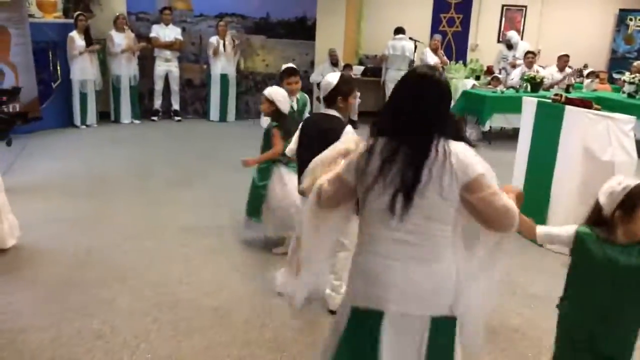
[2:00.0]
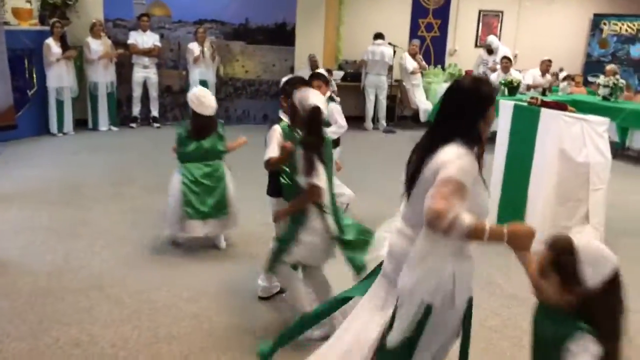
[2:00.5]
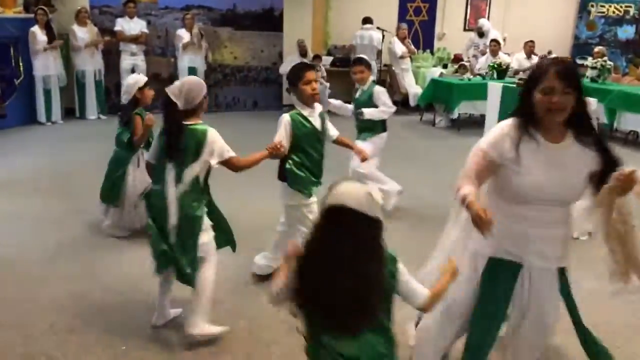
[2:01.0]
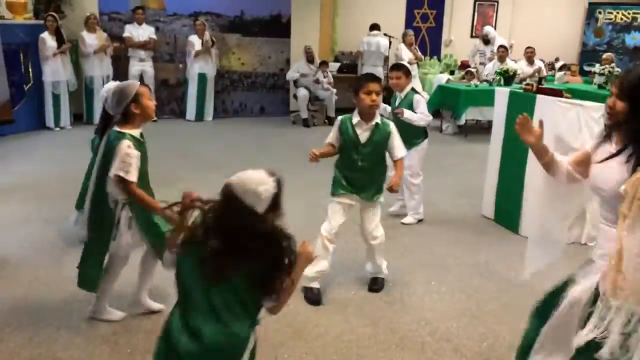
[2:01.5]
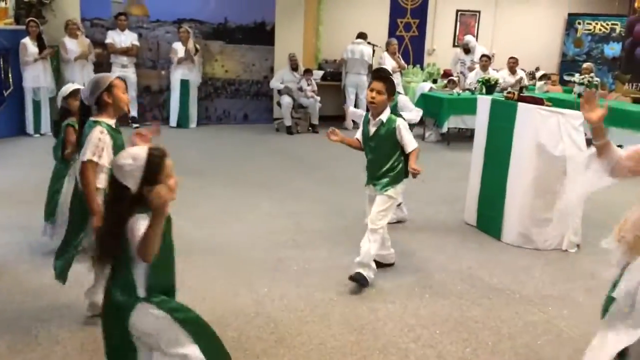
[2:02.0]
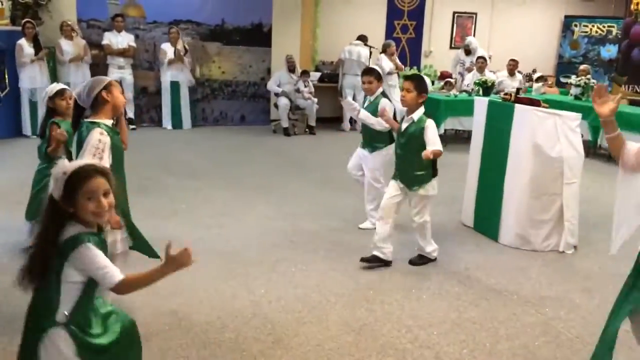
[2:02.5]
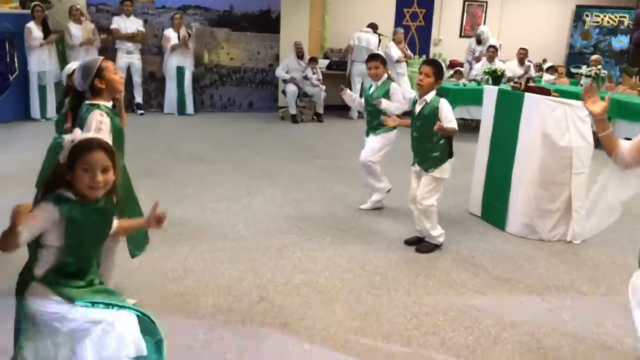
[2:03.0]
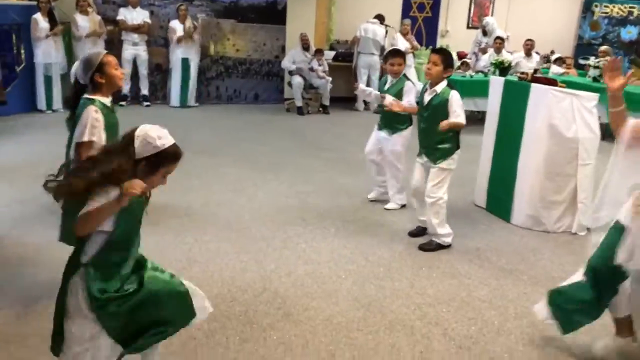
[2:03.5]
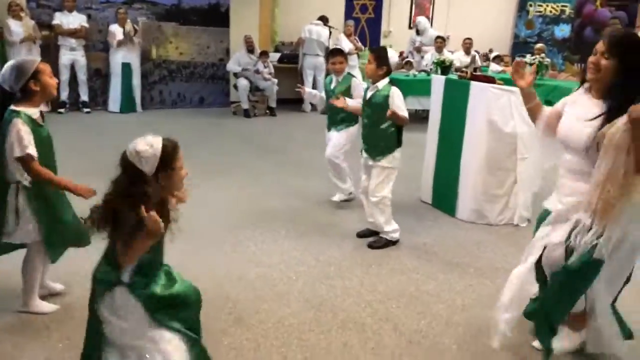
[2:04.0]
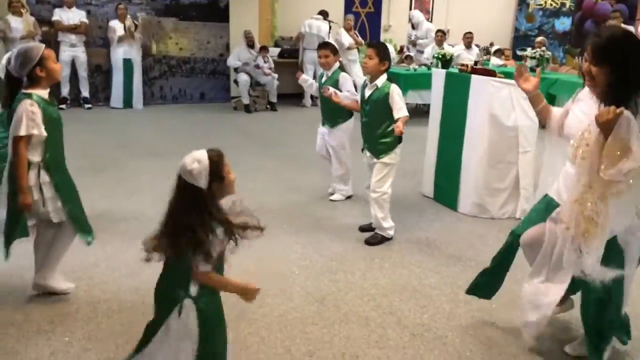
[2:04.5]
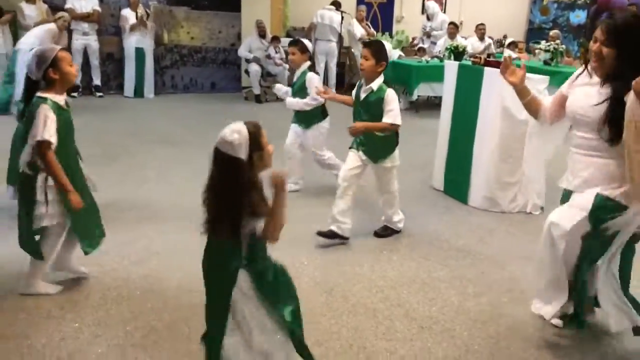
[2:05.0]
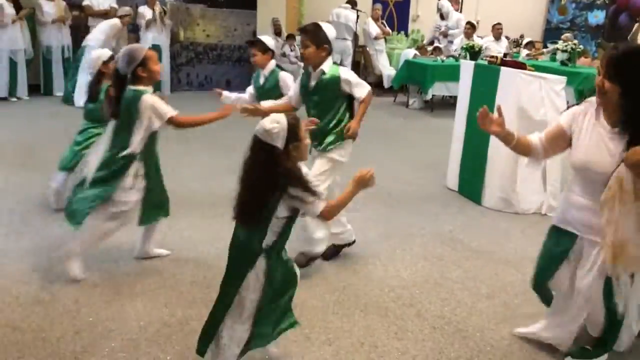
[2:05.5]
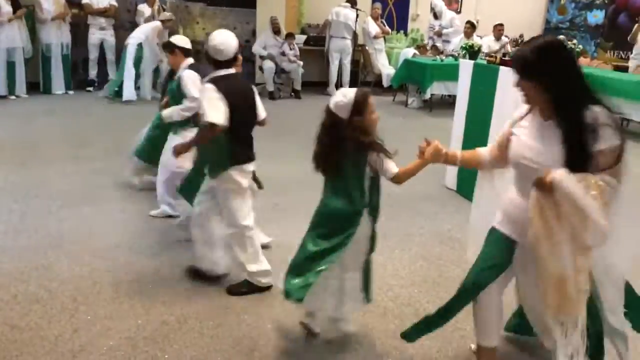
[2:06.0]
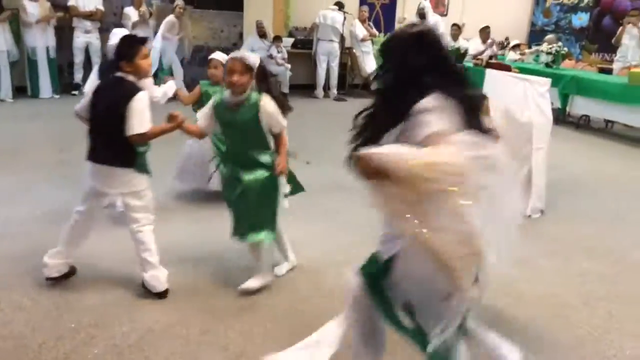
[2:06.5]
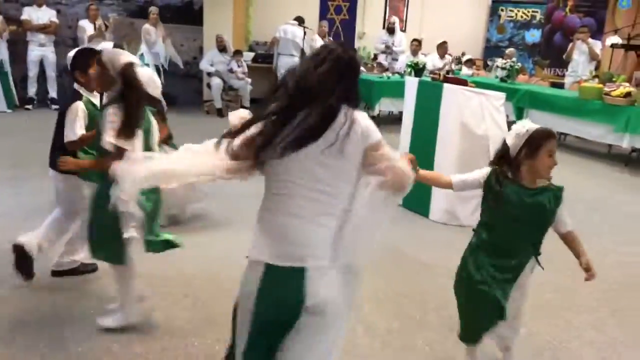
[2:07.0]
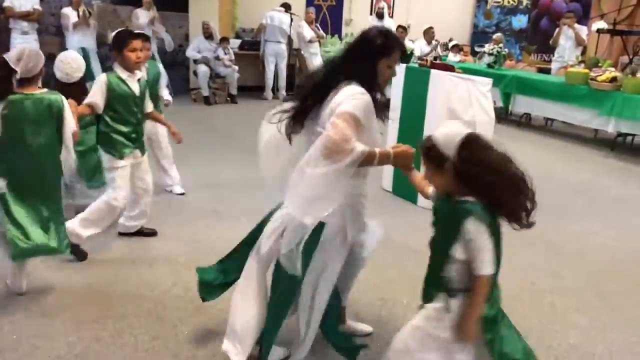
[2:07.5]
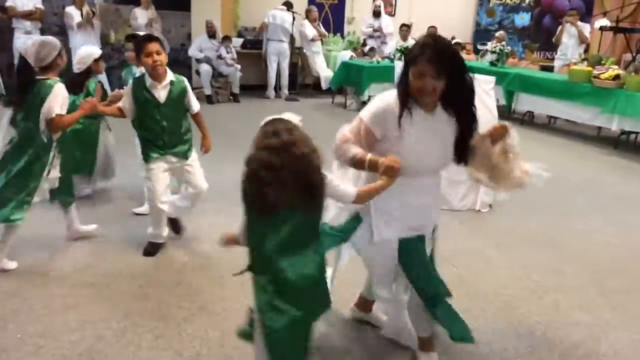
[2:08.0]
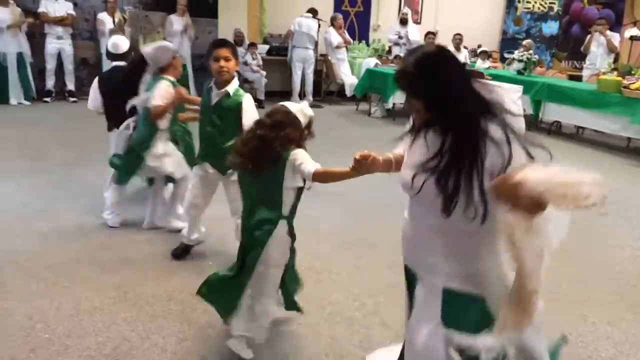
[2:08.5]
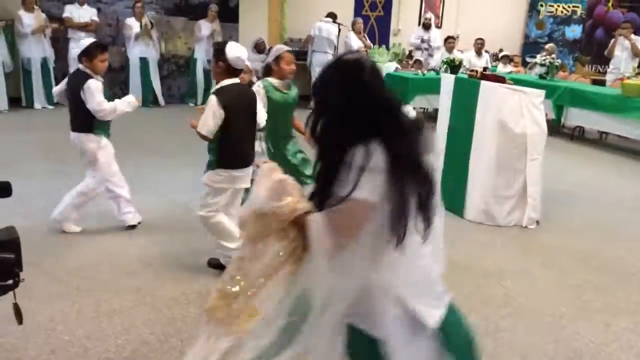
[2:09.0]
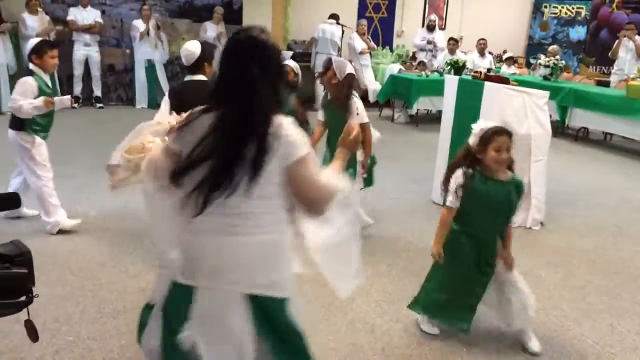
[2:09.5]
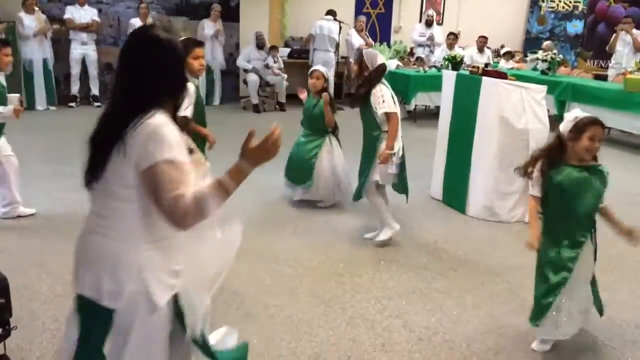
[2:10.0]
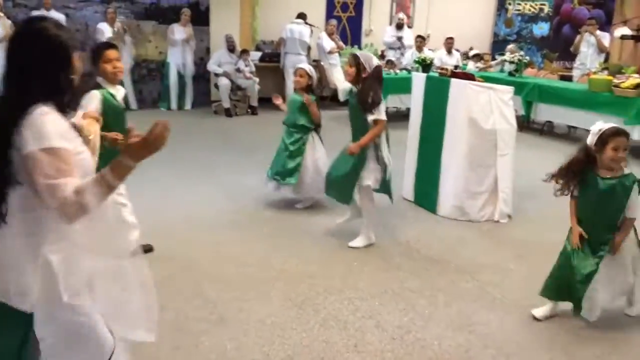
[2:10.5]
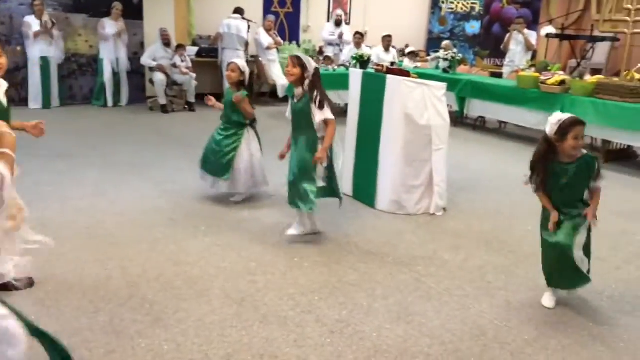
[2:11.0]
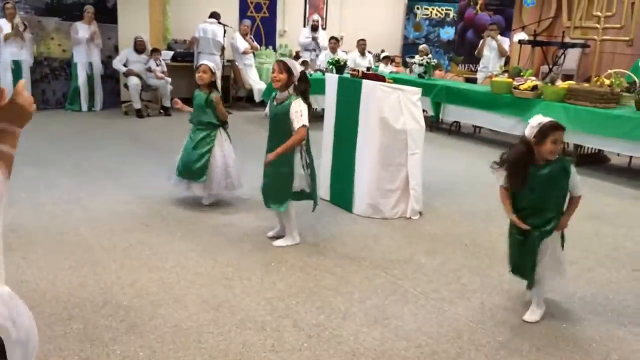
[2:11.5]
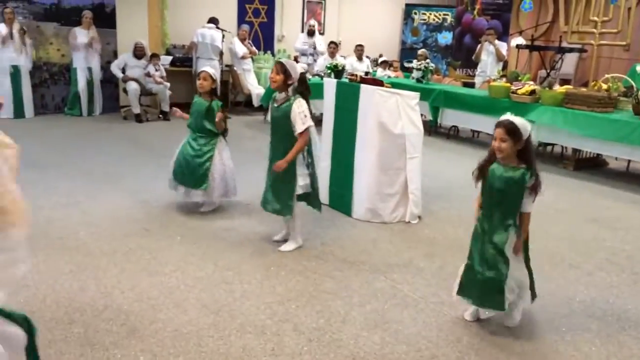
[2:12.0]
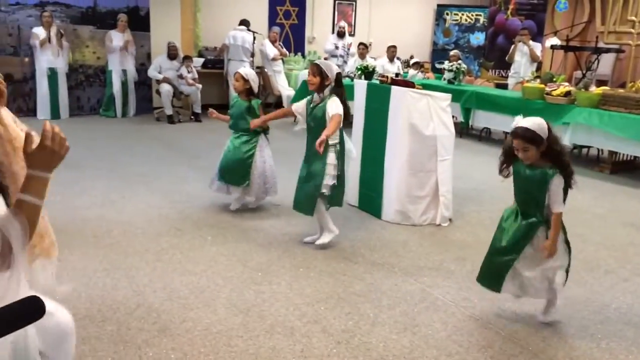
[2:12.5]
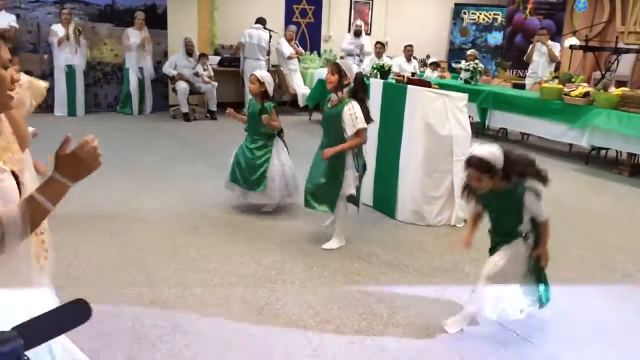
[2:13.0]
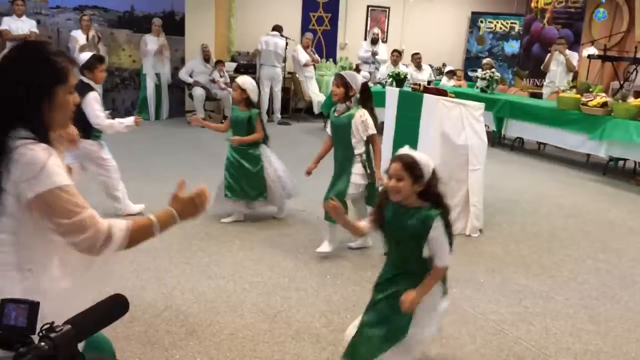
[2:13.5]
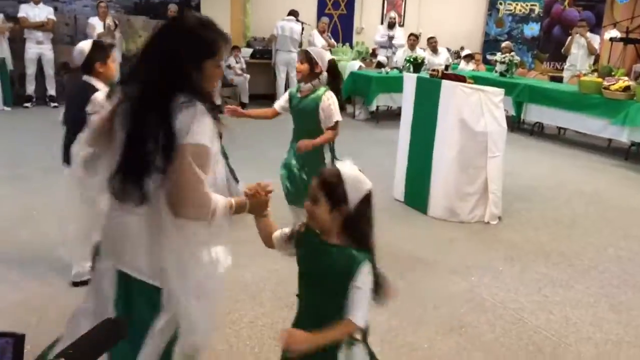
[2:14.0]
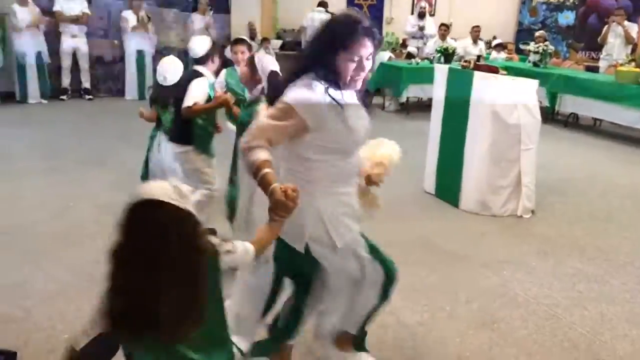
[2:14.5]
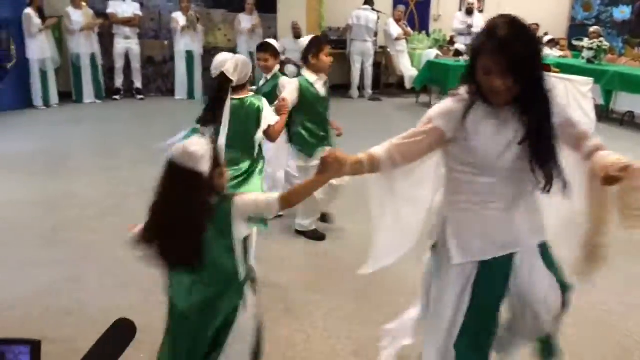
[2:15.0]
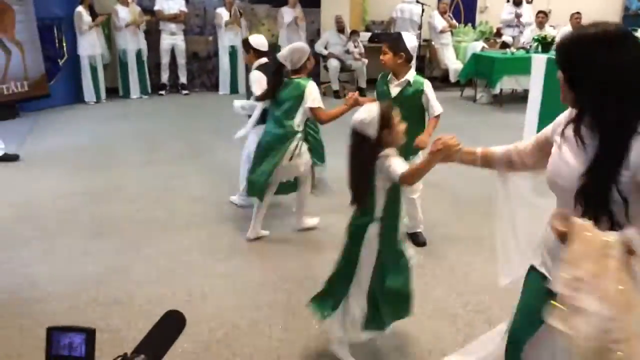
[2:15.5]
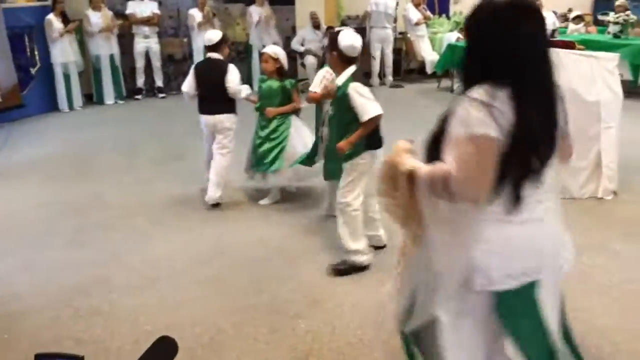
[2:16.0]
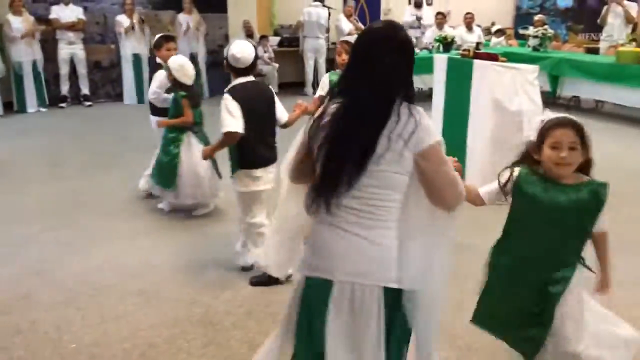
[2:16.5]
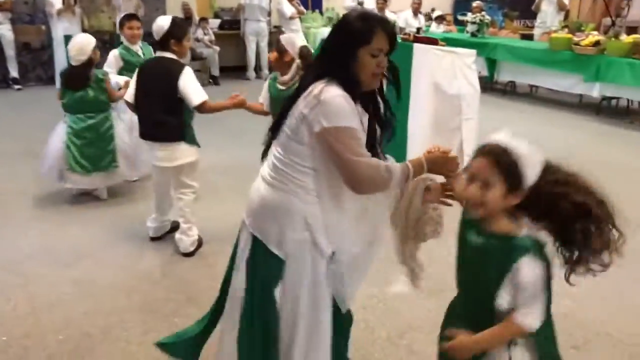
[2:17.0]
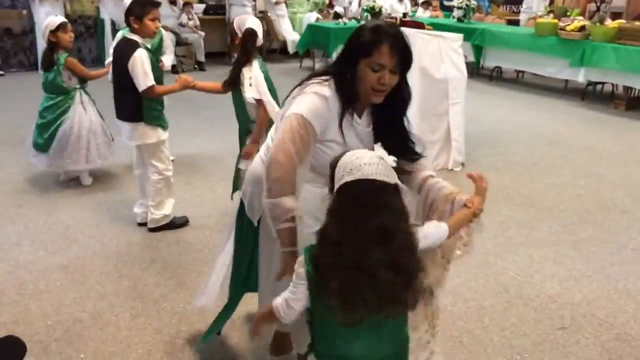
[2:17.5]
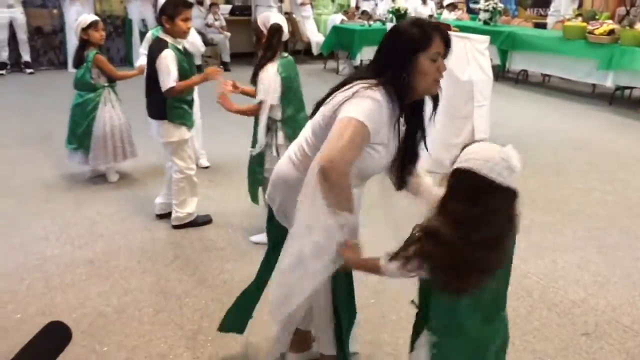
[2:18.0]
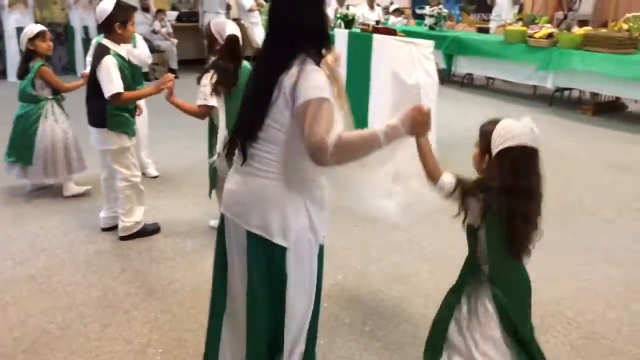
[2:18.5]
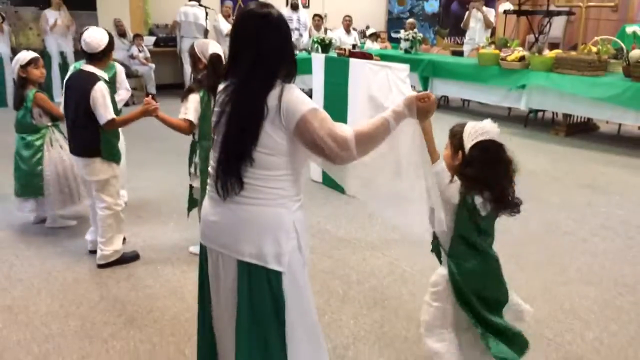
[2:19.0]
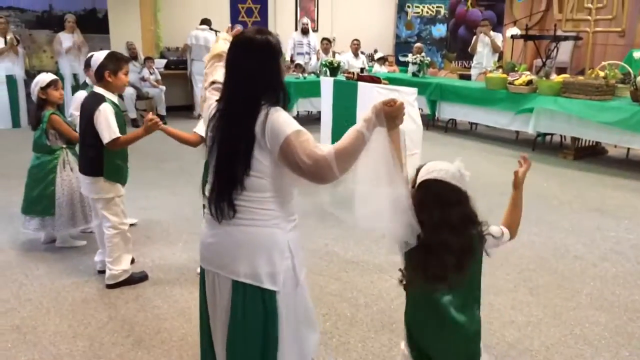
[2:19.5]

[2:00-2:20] The children are still performing while adults clap. Several tables are probably put together, forming a wide, large layout. The tablecloths have two layers: a white bottom layer like a table skirt, and a green main tablecloth above it. The children seem to be taking part in some type of ceremony, maybe a holiday, in what looks like maybe a community center attached to a place of worship. They spin around with their partners and then start skipping in place again.